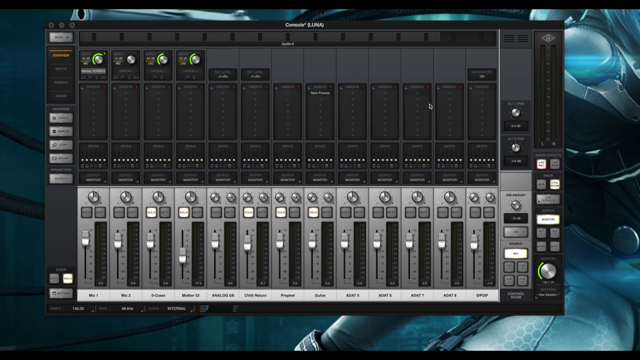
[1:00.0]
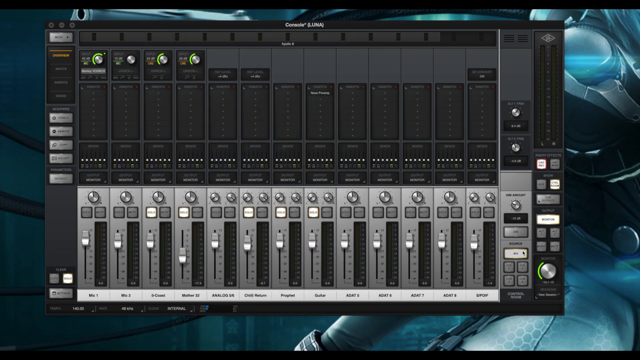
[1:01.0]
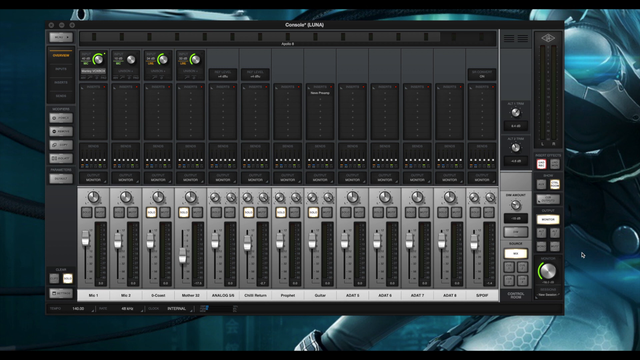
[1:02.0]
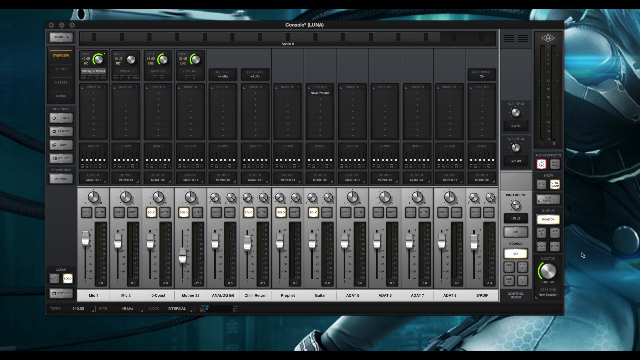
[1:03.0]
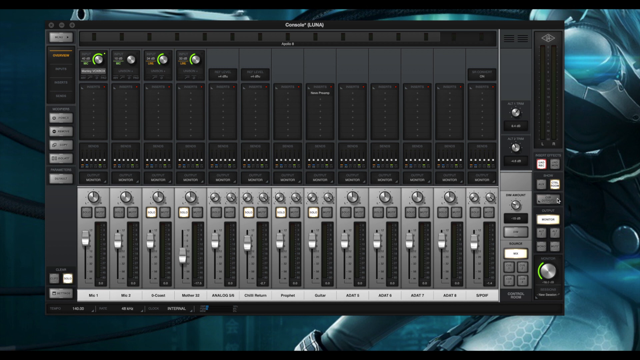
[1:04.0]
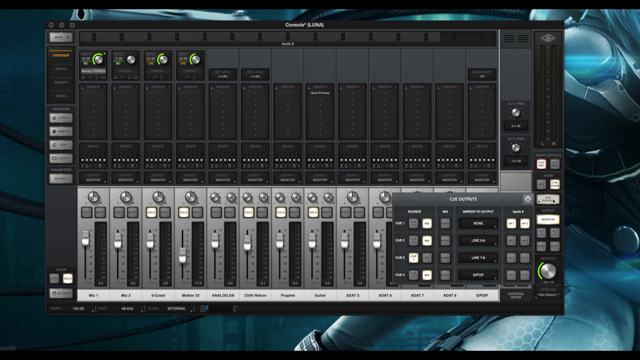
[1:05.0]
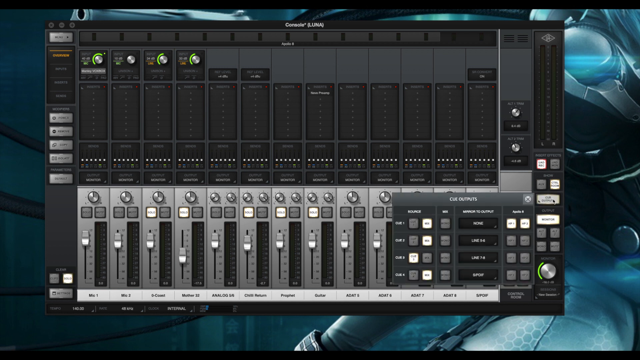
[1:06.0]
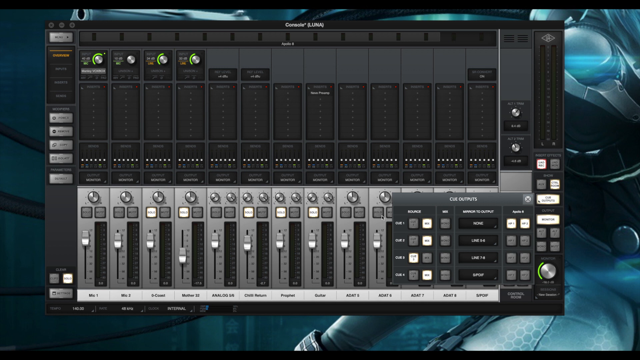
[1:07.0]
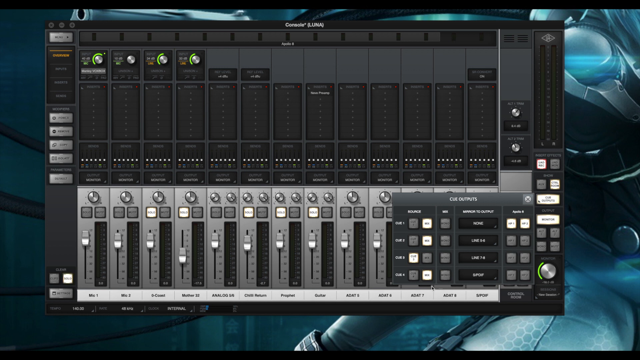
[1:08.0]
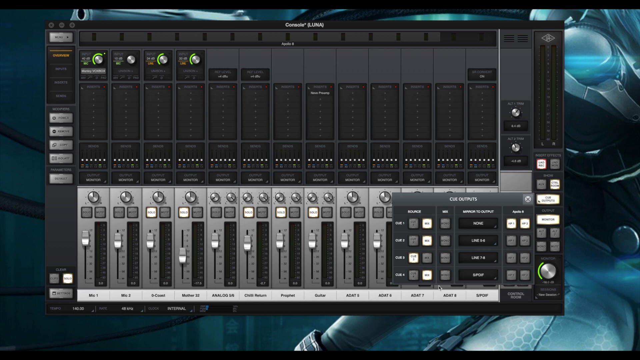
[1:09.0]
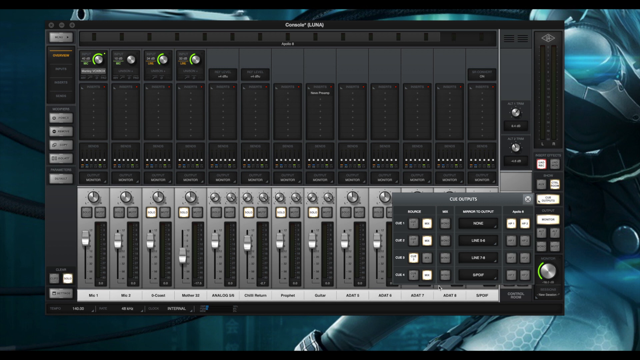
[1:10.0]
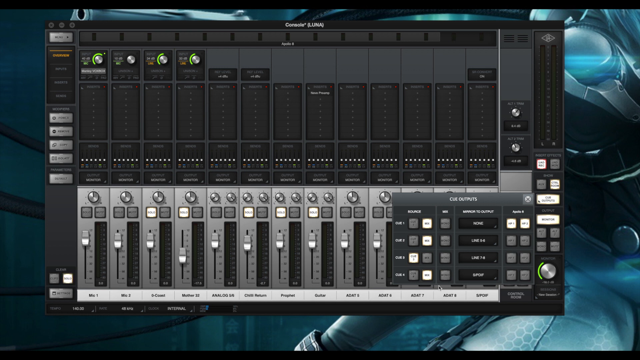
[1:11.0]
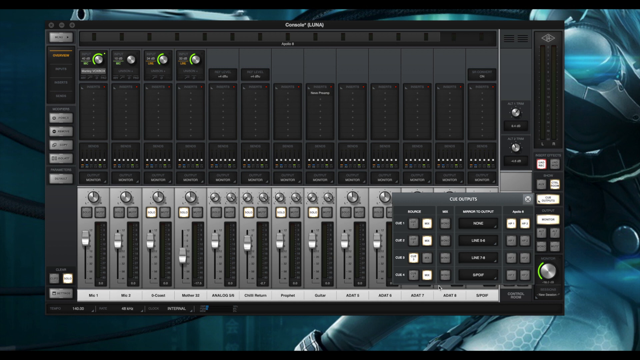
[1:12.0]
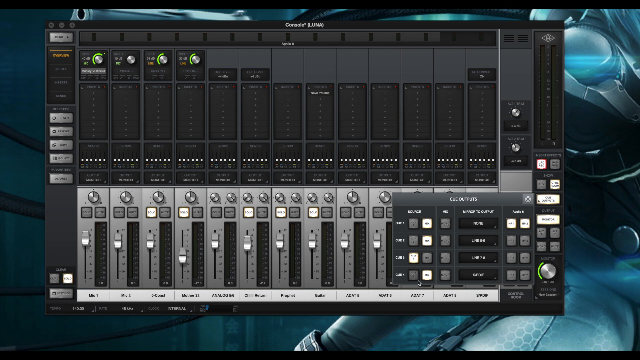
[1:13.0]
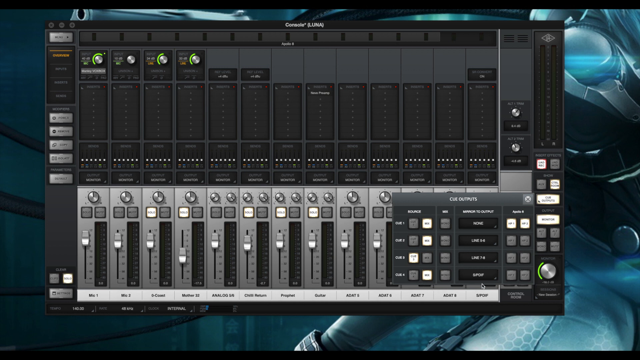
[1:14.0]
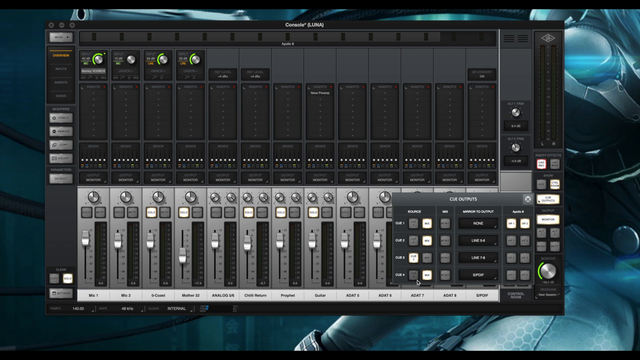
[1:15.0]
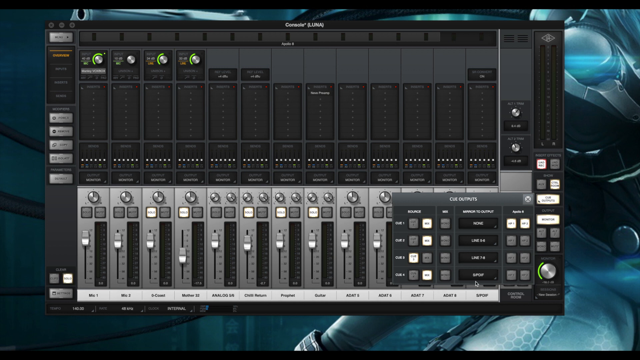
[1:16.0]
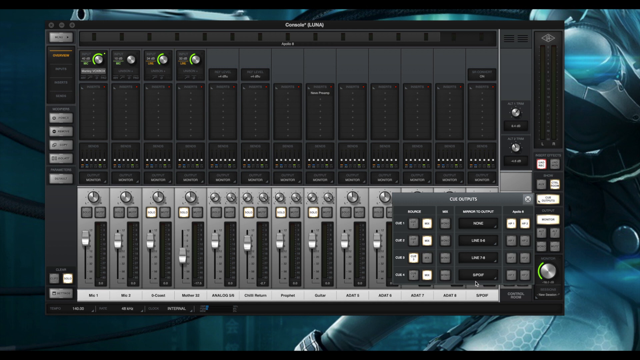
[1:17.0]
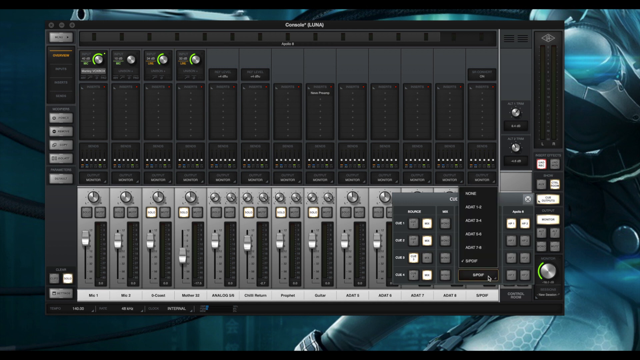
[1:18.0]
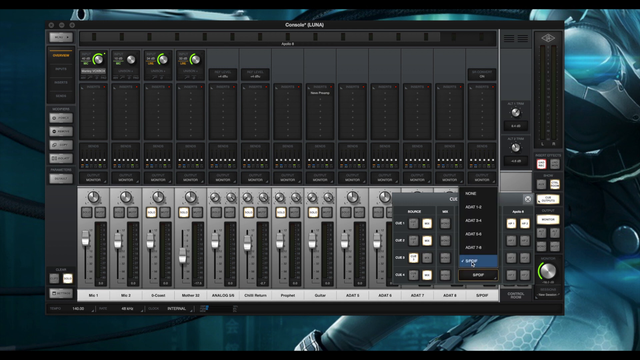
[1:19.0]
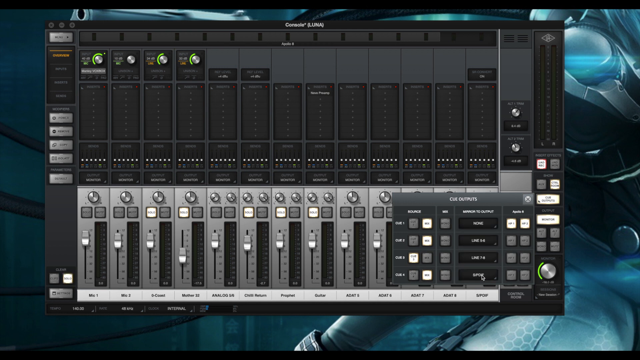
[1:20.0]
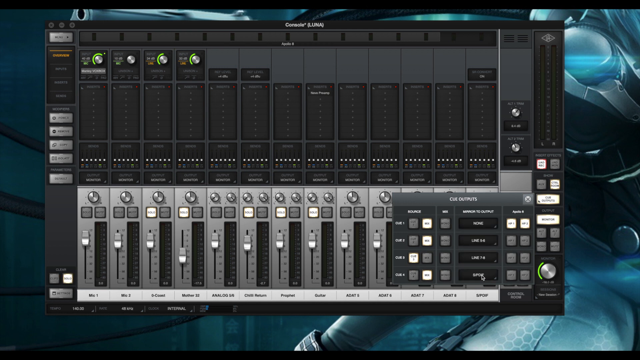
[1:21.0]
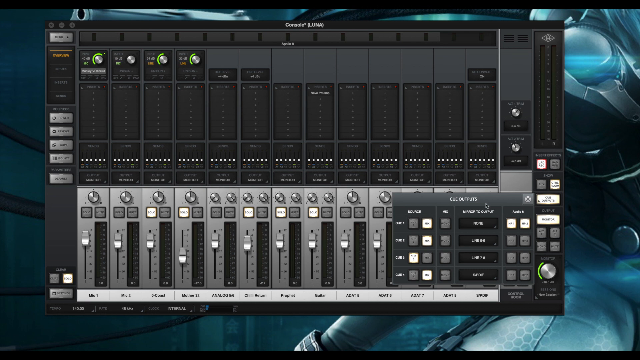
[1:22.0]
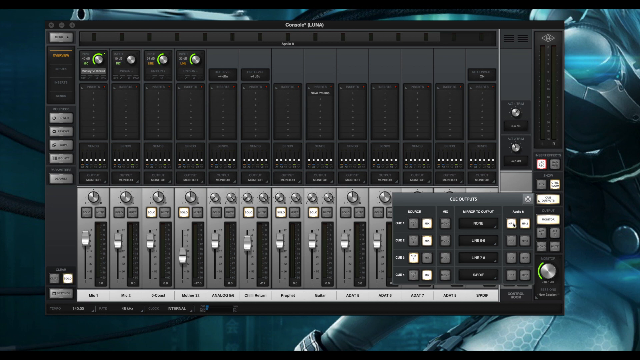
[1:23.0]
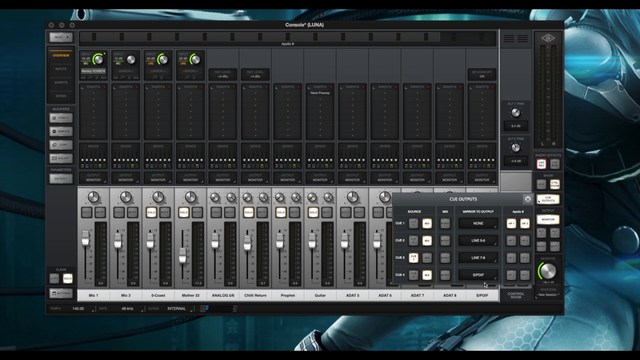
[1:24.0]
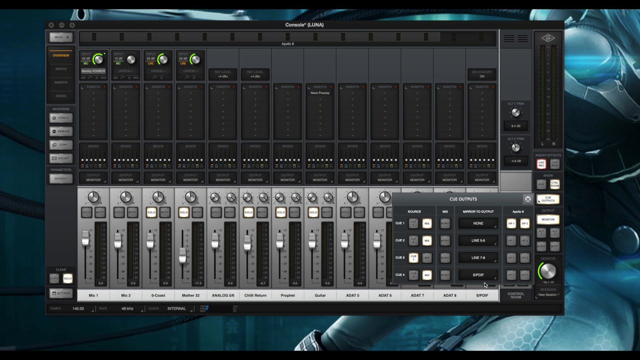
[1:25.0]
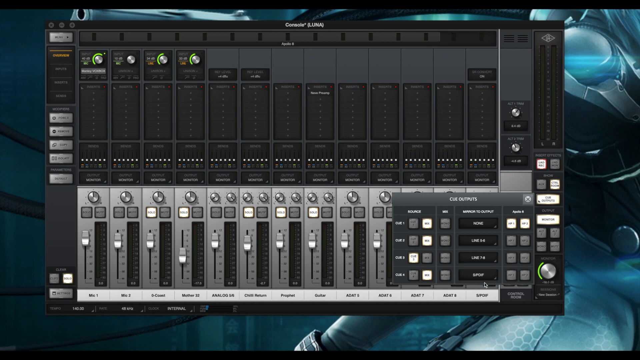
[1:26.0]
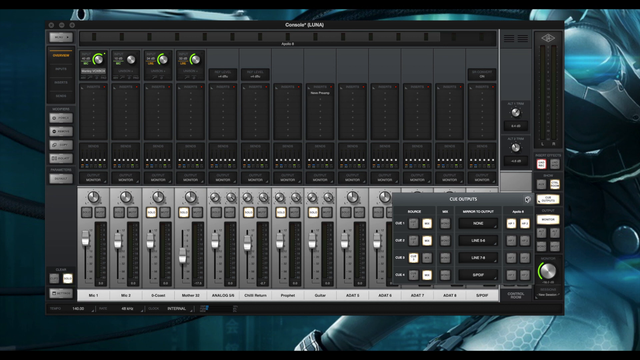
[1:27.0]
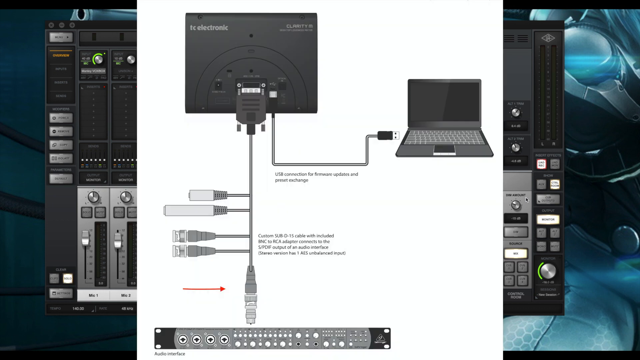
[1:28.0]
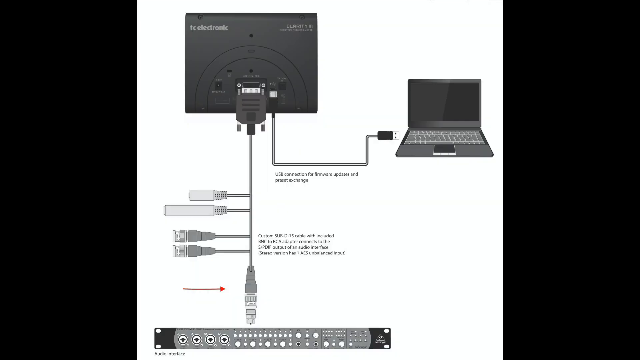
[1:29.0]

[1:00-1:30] In the software program, the mouse cursor moves around and presses a button on the right side of the program, whose label is not legible. There are many buttons, notches and dials. The cursor then moves up and presses another button, which opens a smaller window at the bottom right of the program, almost emerging from where the button was pressed; the window apparently reads "two outputs". The cursor moves around this window for a moment without clicking anything, then opens a dropdown menu of sorts and closes it again, apparently relating to the different output options. The window is closed, and the video cuts to an image of a setup with the TC Electronic machine seen earlier, showing USB cables connecting it to a laptop and to some kind of audio setup, with many different cables. A long cable has many different cables sprouting from it; the main one is connected to the TC Electronic machine, and a USB cable and many other things come out of this cable.